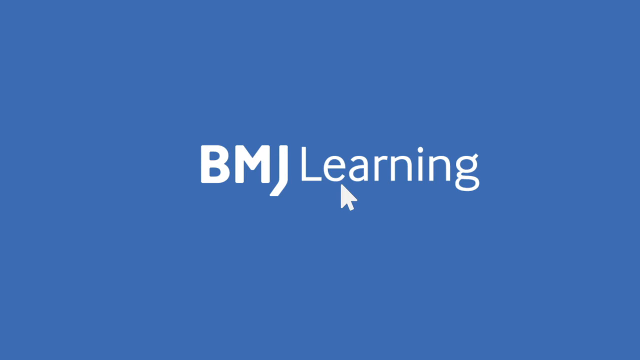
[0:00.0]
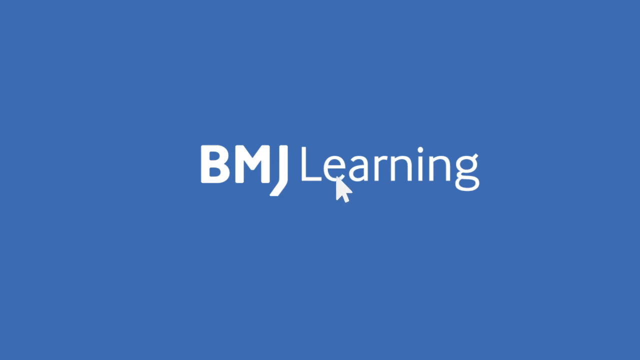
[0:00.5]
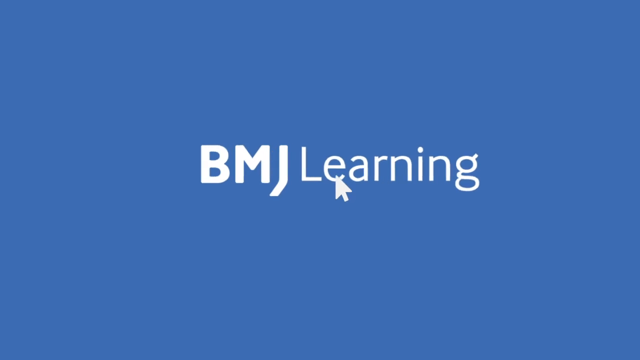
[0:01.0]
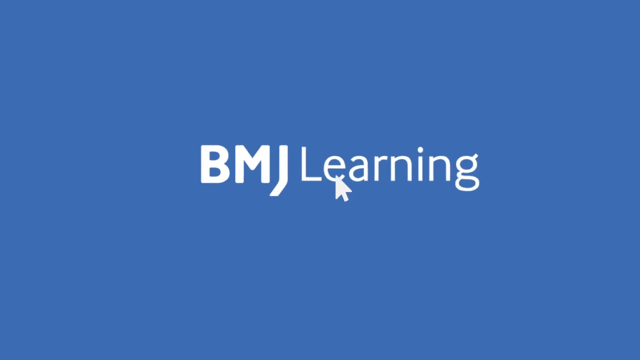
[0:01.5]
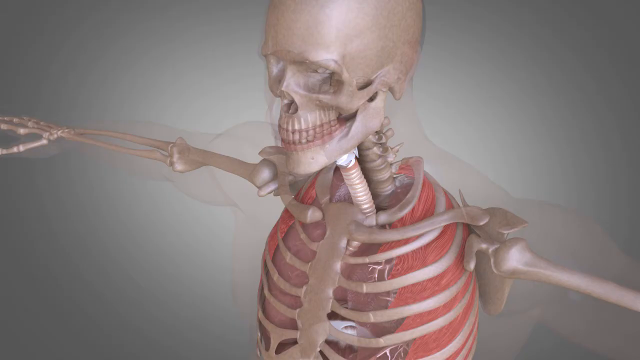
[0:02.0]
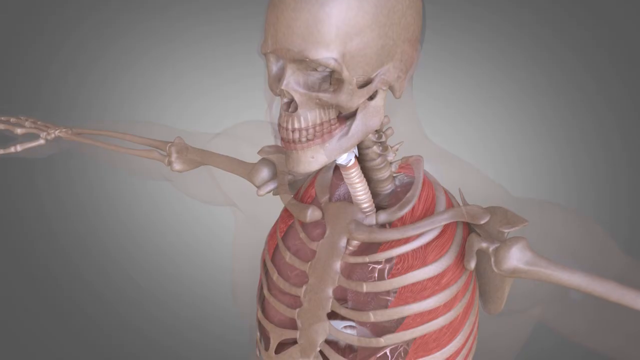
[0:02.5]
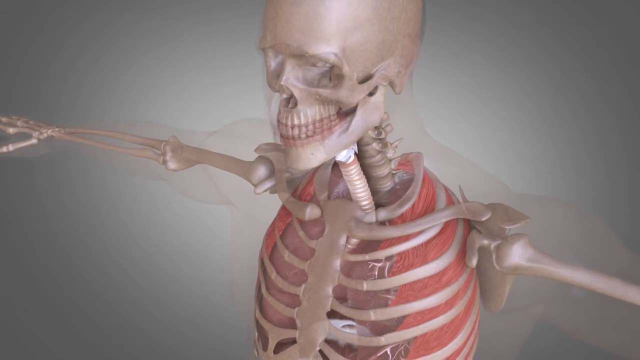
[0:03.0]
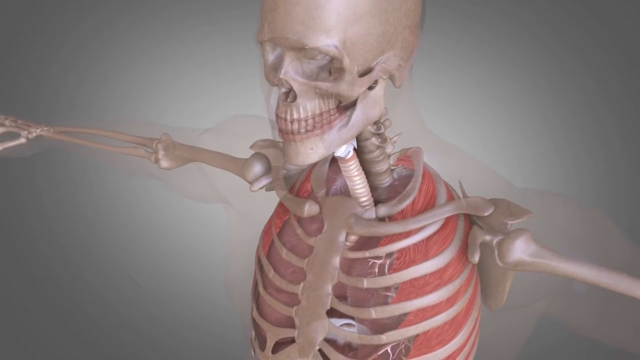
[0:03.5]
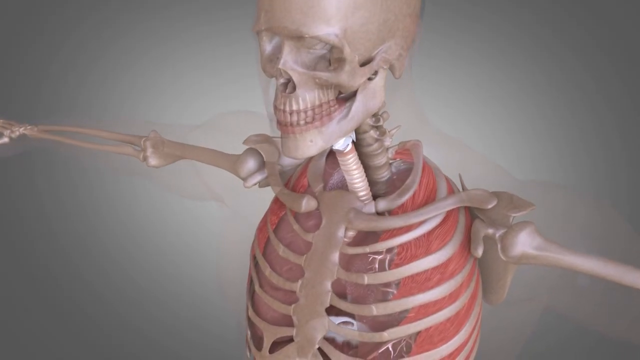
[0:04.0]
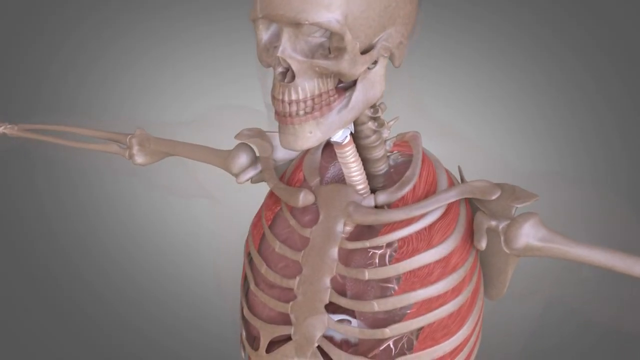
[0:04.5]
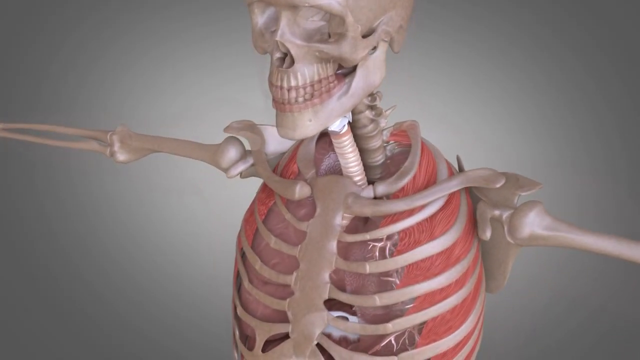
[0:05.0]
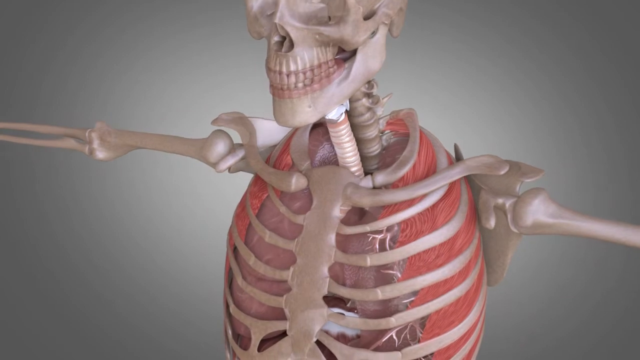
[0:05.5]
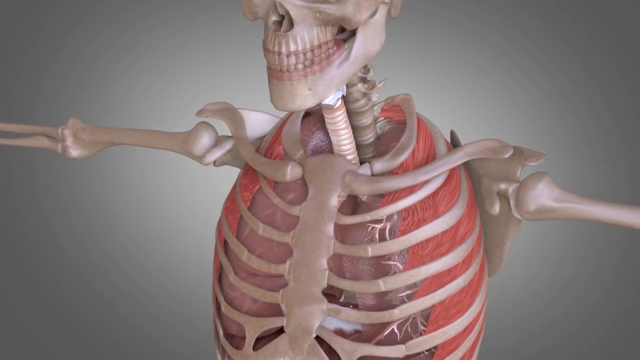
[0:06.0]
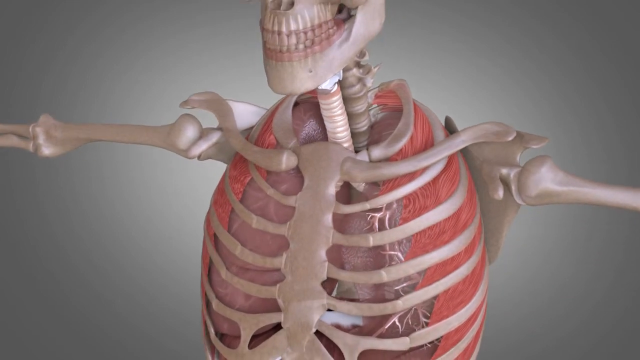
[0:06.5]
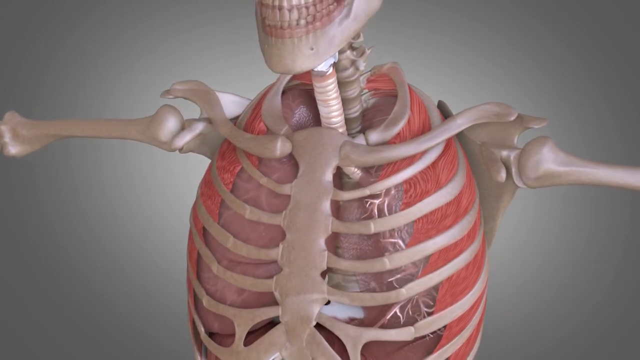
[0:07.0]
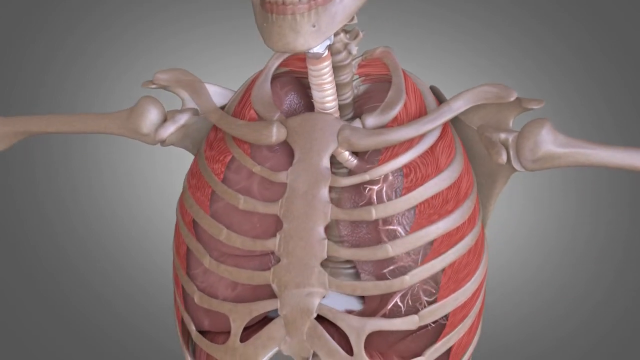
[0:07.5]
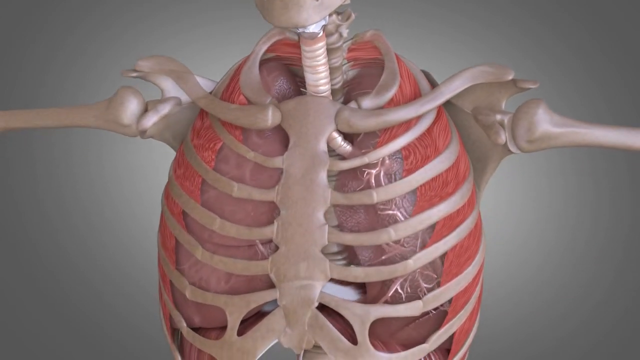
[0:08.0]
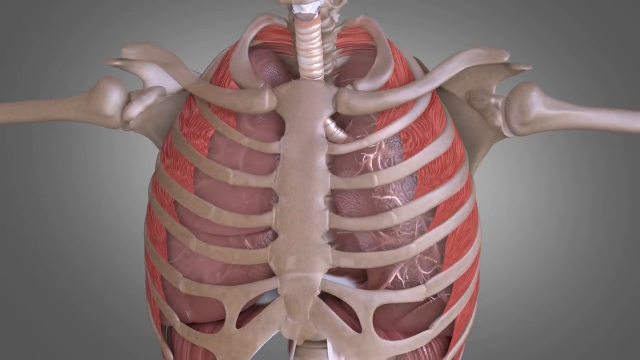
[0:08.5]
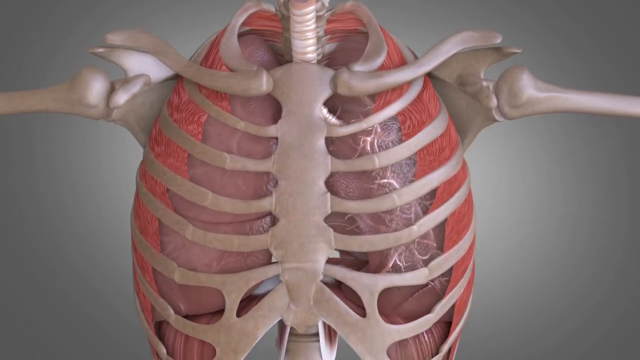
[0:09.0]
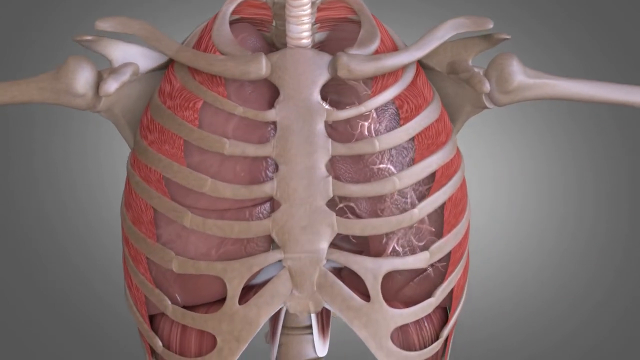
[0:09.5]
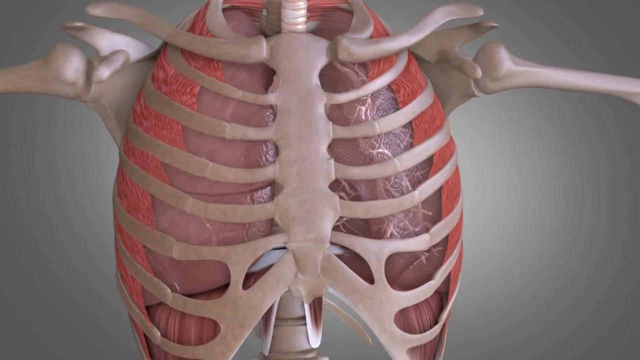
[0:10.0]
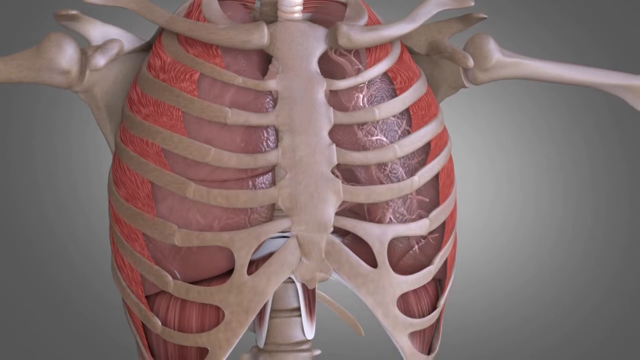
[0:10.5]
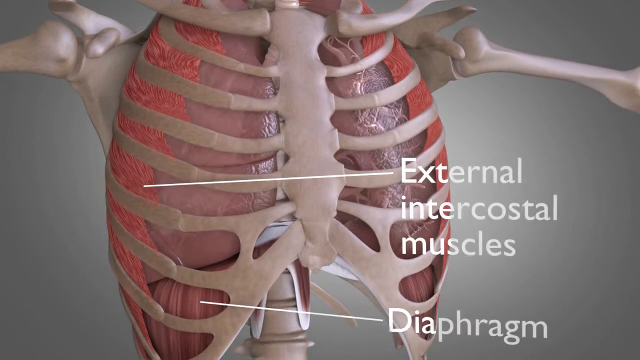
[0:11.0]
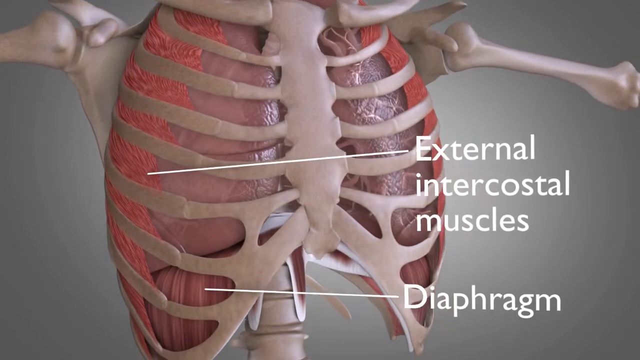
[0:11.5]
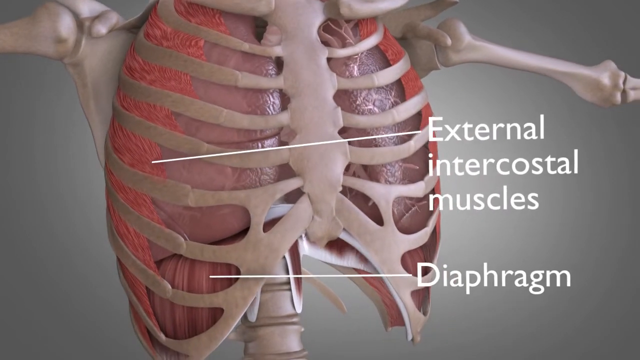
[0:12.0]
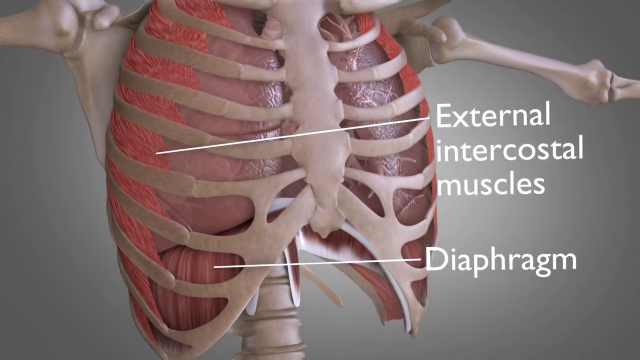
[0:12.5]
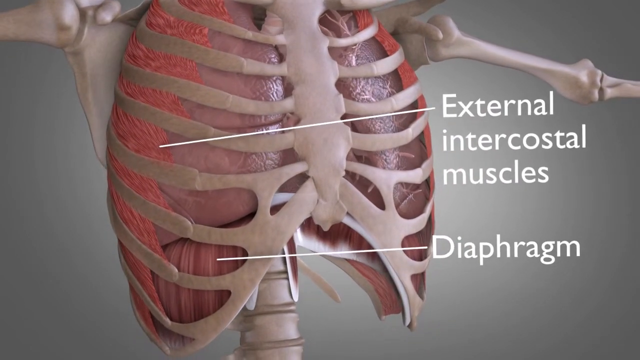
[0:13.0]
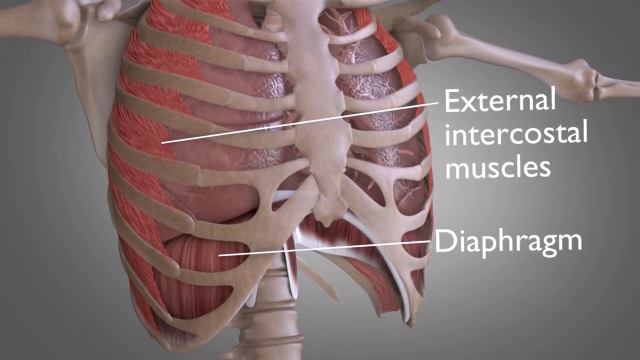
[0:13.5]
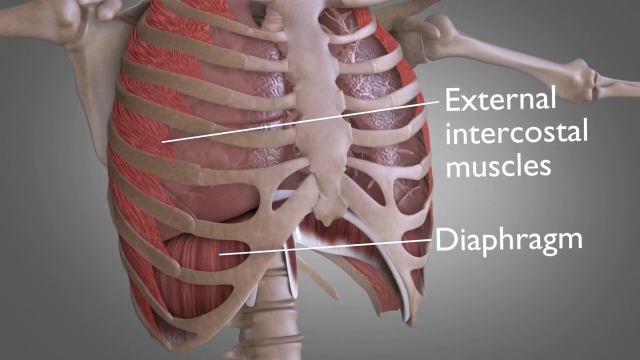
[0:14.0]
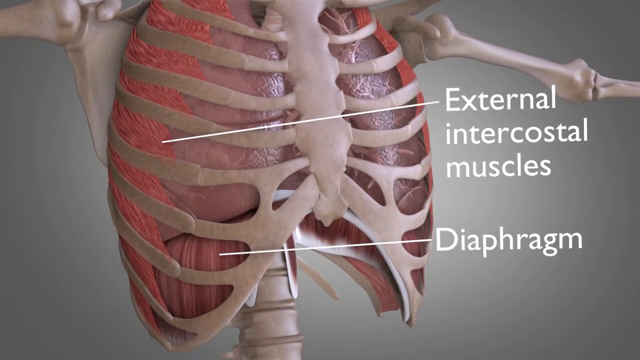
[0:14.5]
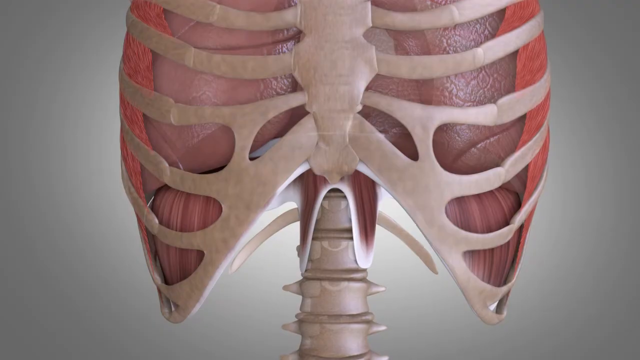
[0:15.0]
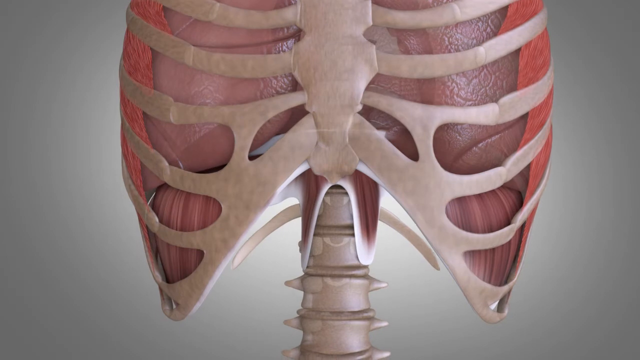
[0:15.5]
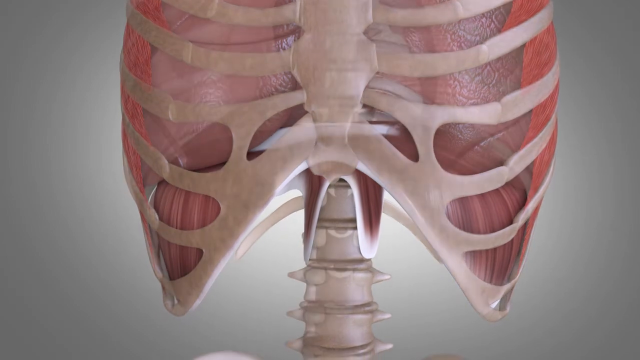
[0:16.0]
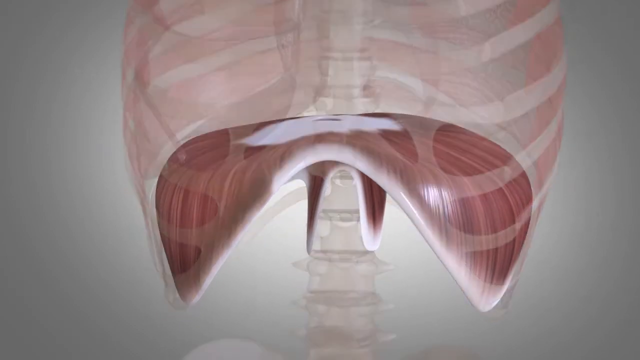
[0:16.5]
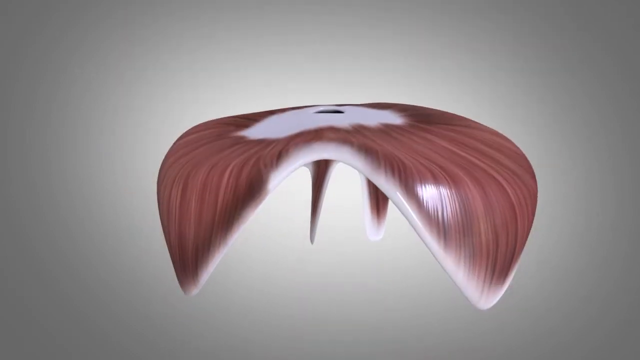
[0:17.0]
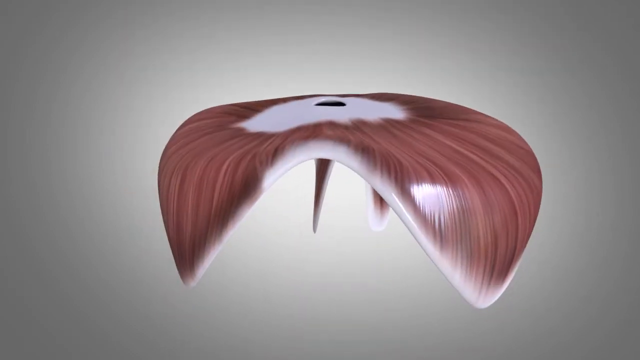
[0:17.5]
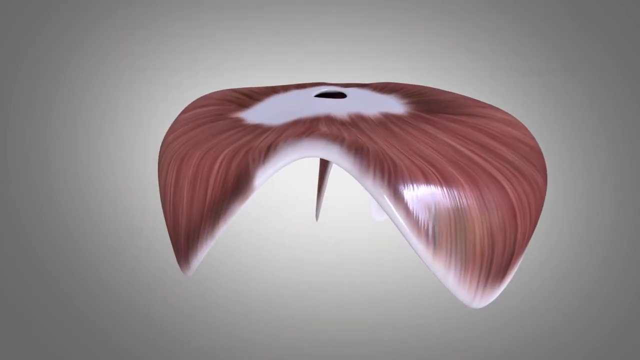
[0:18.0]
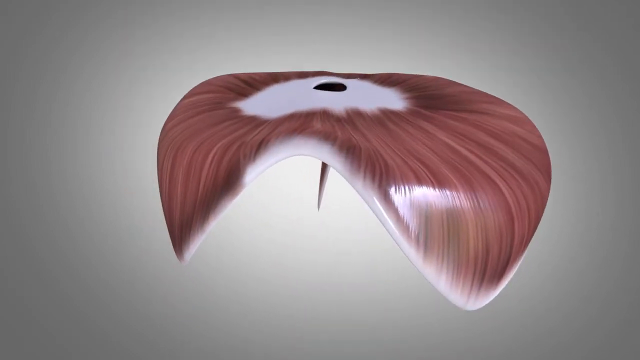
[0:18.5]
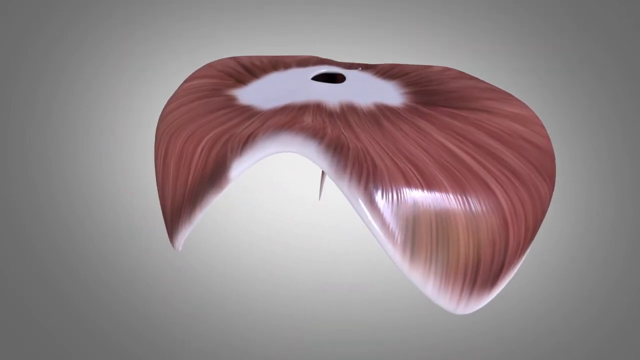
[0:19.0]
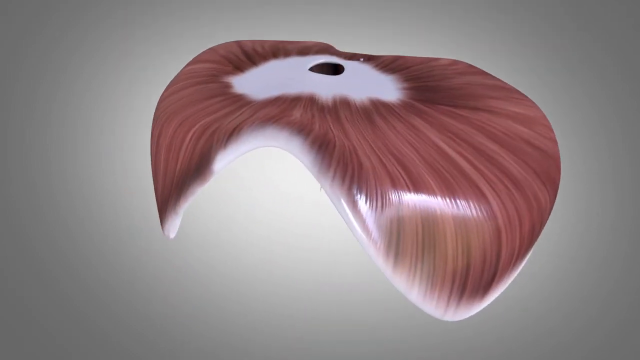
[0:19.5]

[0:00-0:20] The video examines the muscles in the human body. It opens on a title screen that says "BMJ Learning." A white cursor arrow appears to click it, and the scene disappears. What looks like a CGI model of a human skeleton appears, with the muscles inside the rib cage. The camera pans down to the chest of the skeleton, showing the lungs and the muscles below the bones. Text appears on the screen with long white lines pointing to different features: the top label reads "External intercostal muscles" and the bottom one reads "Diaphragm." The image changes slightly to a close-up of the bottom of the ribs where the diaphragm is located, and then everything around it disappears, leaving only a CGI representation of the diaphragm. It looks like a flat pink object with a shiny surface, and its front sides slope downward into points.